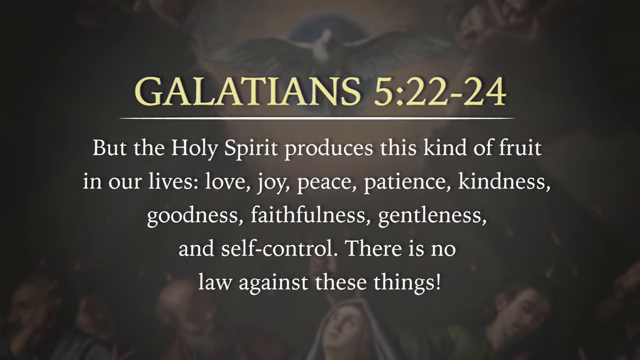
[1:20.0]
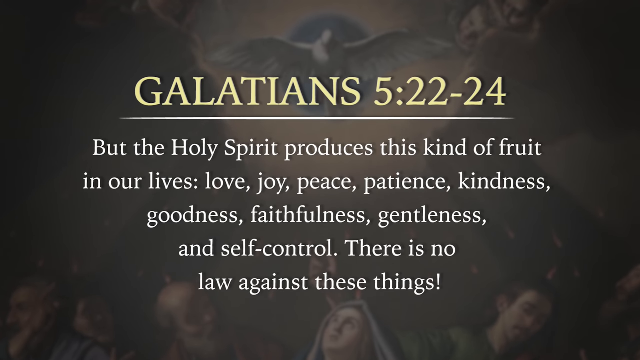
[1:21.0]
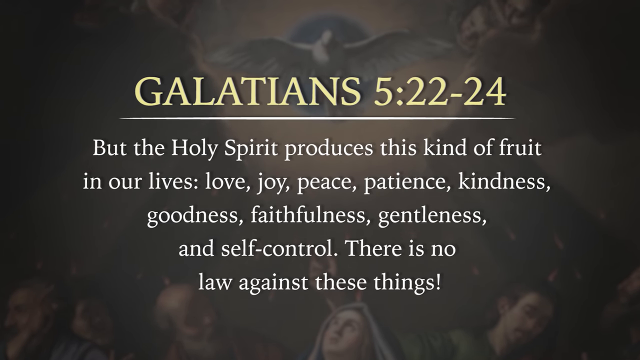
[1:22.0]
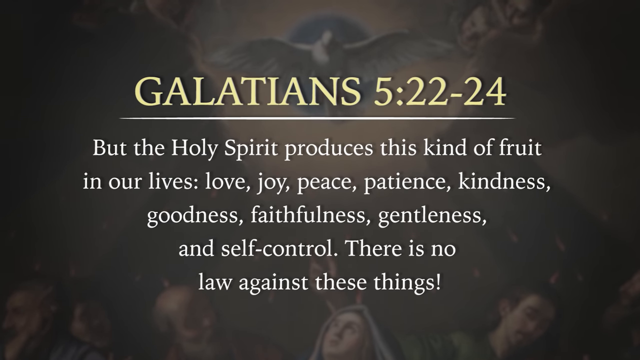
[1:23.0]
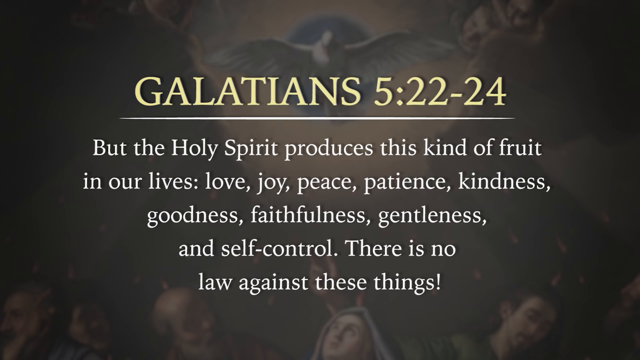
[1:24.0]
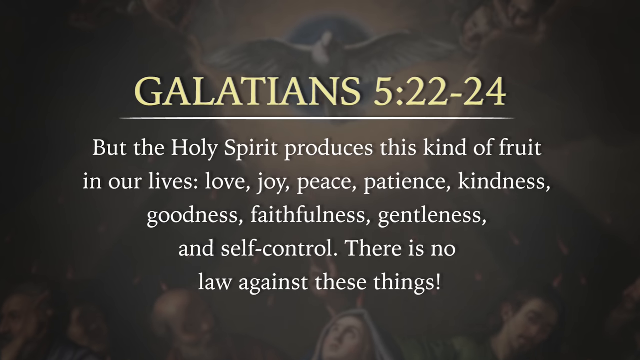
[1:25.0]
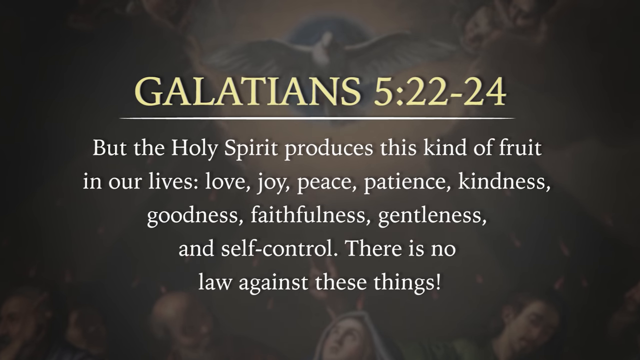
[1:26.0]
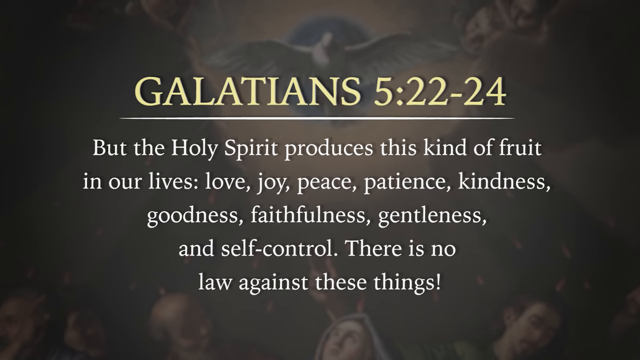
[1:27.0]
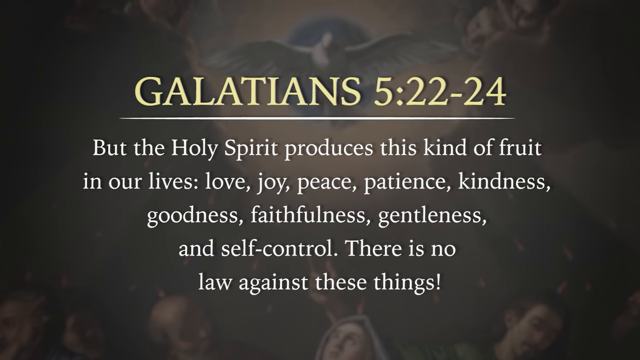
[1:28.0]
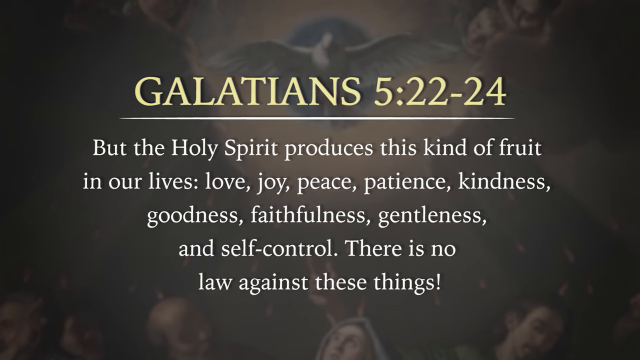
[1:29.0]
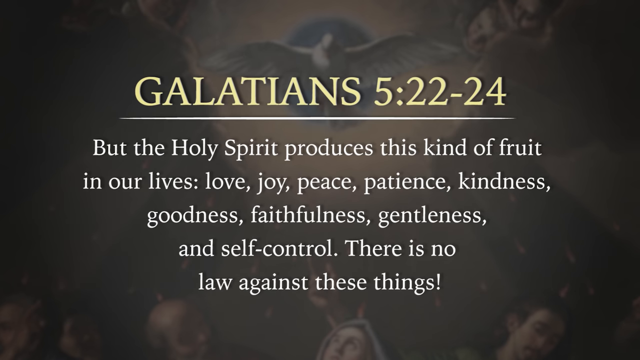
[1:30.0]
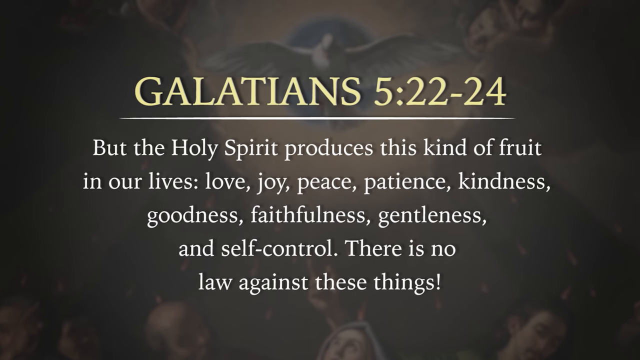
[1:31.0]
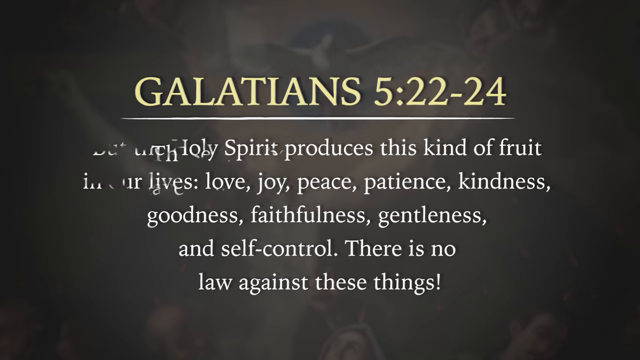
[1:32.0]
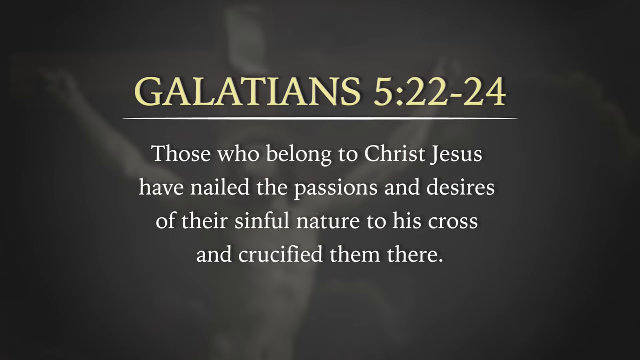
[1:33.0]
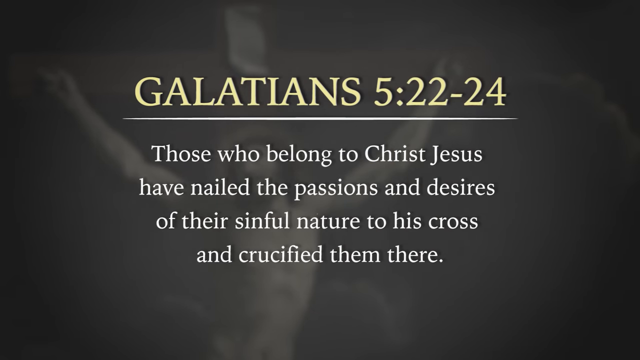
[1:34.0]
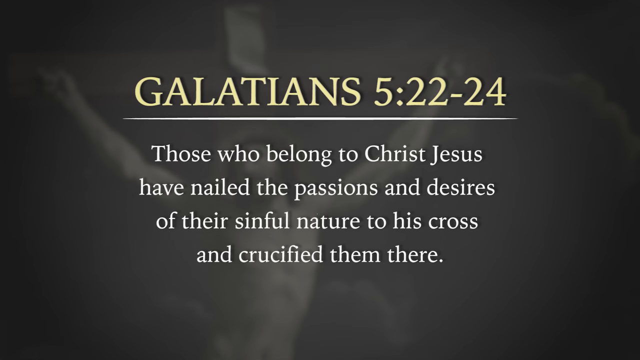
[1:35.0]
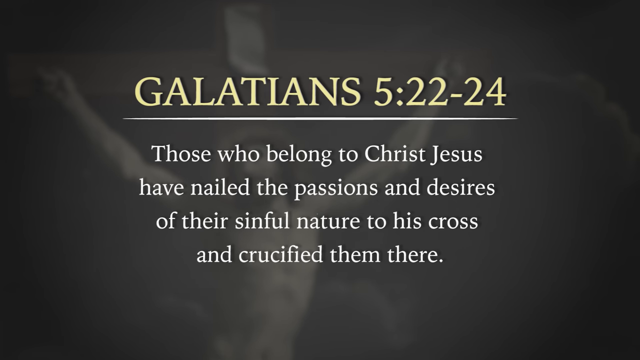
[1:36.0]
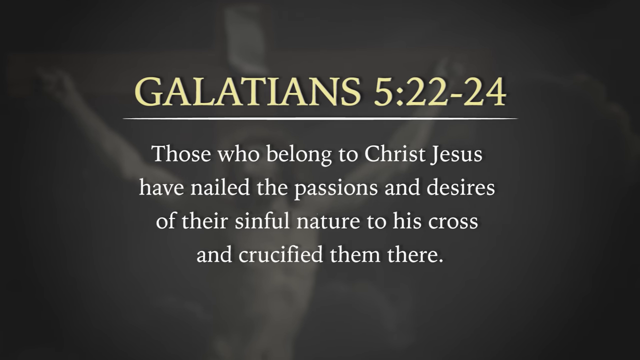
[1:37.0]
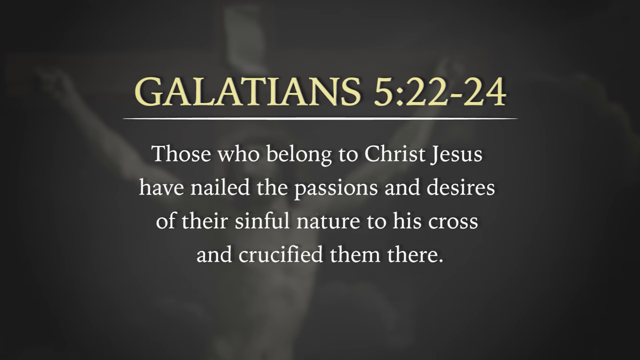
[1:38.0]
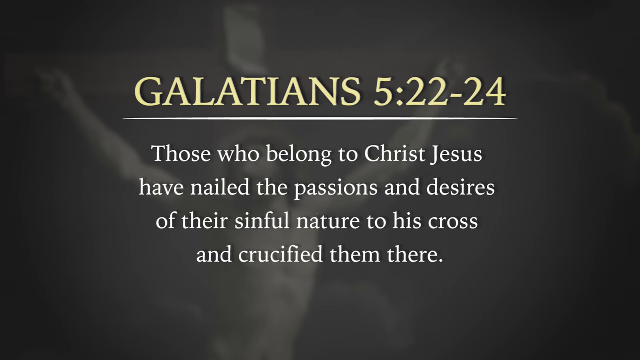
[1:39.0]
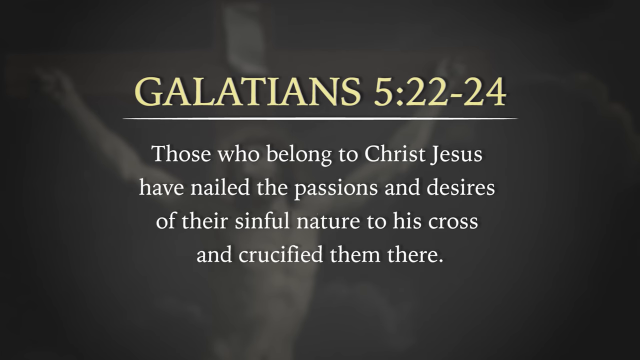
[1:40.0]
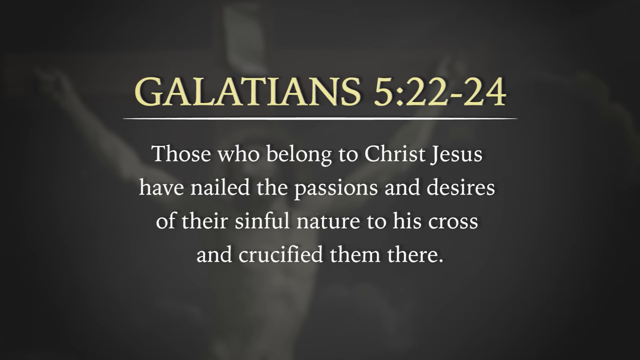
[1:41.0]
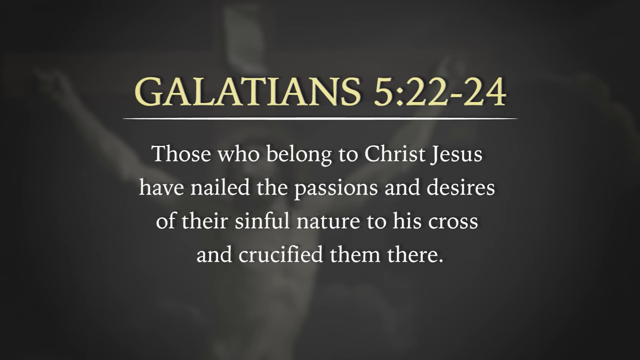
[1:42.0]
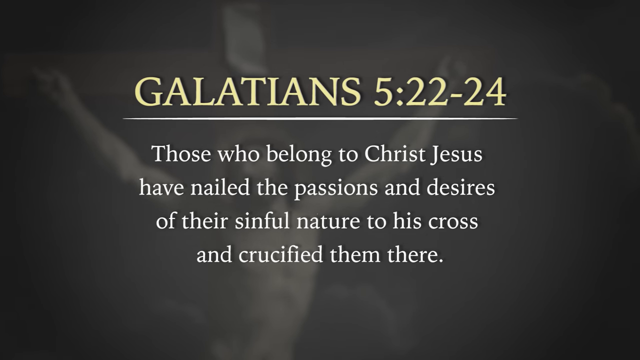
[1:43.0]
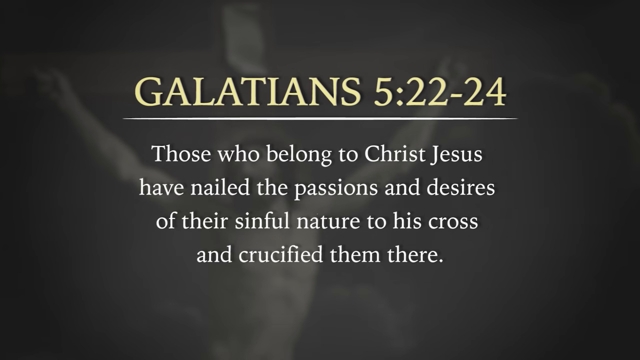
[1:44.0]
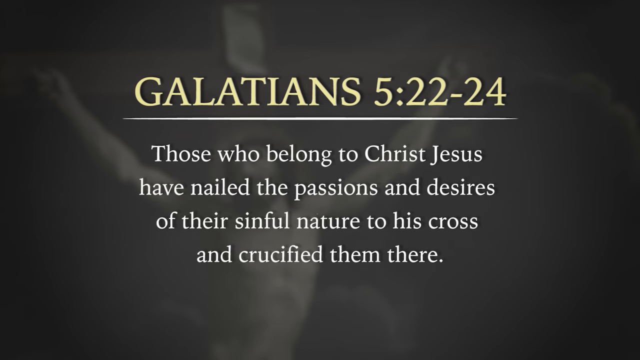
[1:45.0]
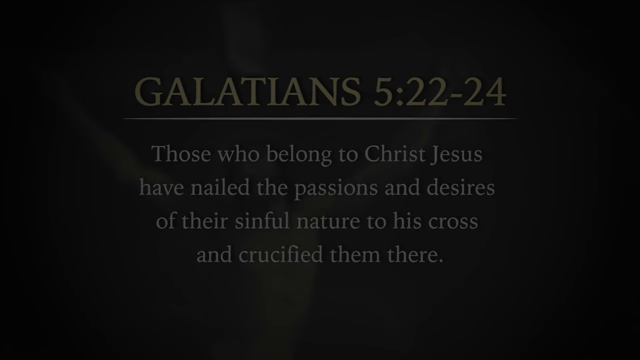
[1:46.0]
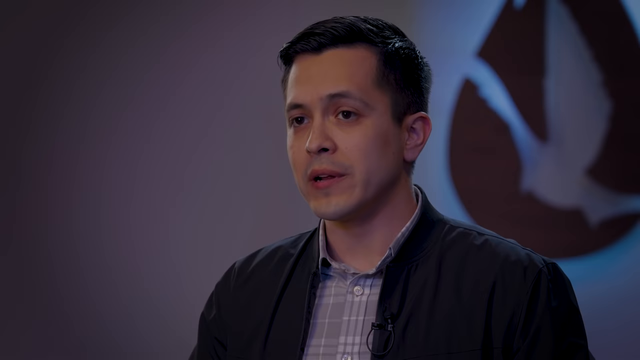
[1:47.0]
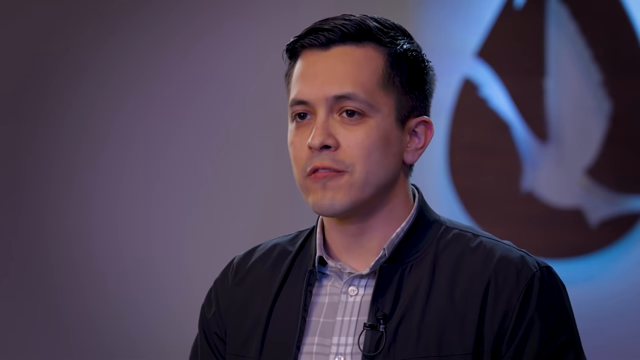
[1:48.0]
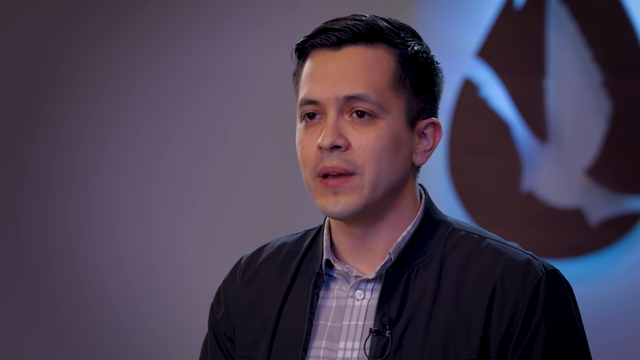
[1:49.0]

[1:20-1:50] Text appears in the center of the frame, with yellow text at the top of the screen. A horizontal white line separates the paragraph from the yellow text. In the background there are images that are not well visible because the background is not very bright; one of them seems to show Jesus Christ on the cross, with his face, long dark hair and dark beard visible. Next, a man speaks and looks to the left. He wears a dark jacket and a light shirt buttoned up to his neck. Behind him on the right of the frame is a very large, irregularly shaped dark logo; the wall immediately behind the logo is illuminated in blue, while the rest of the wall is dark.